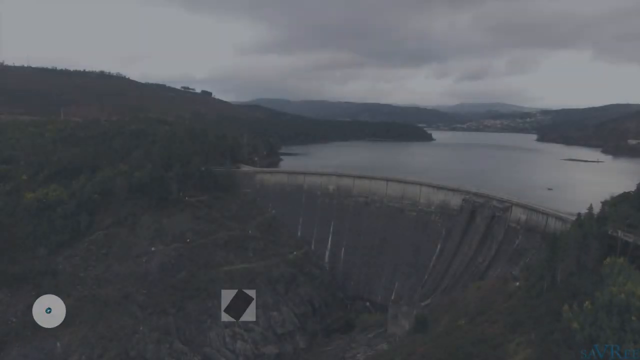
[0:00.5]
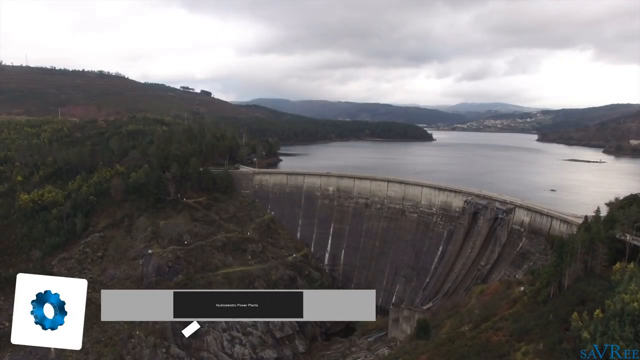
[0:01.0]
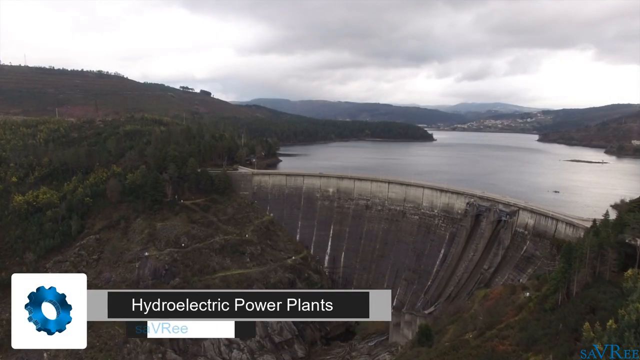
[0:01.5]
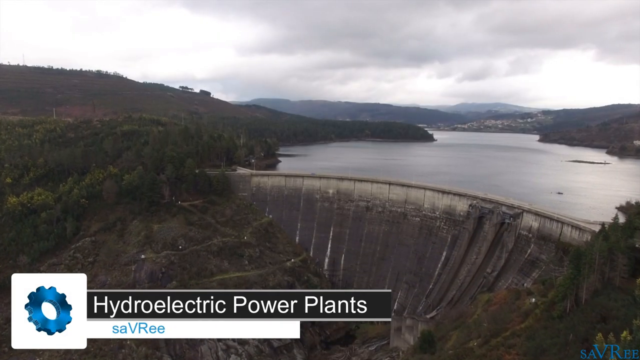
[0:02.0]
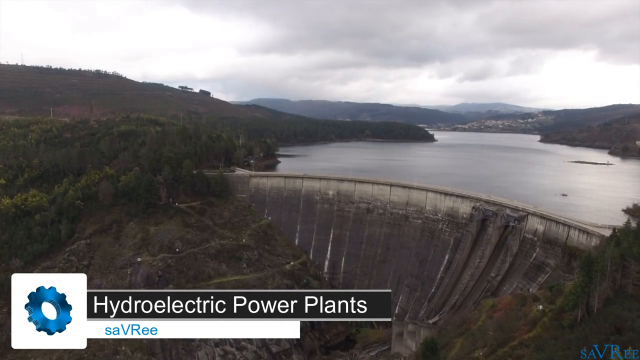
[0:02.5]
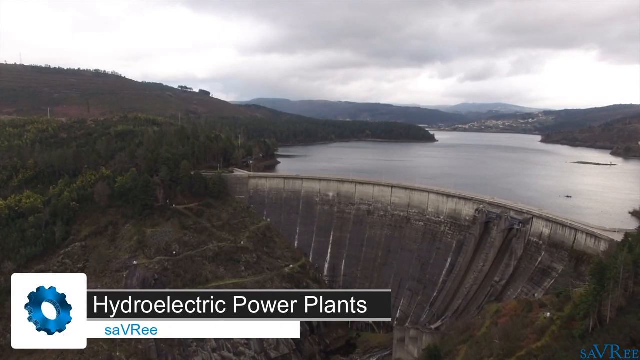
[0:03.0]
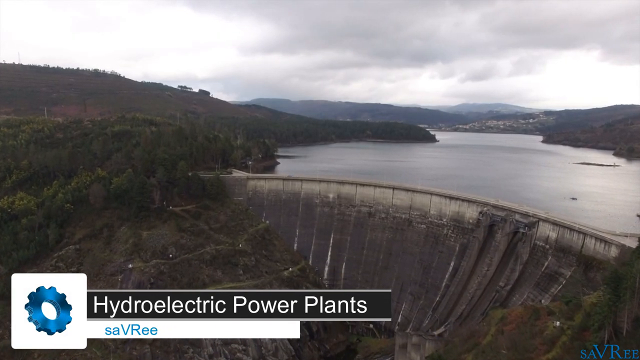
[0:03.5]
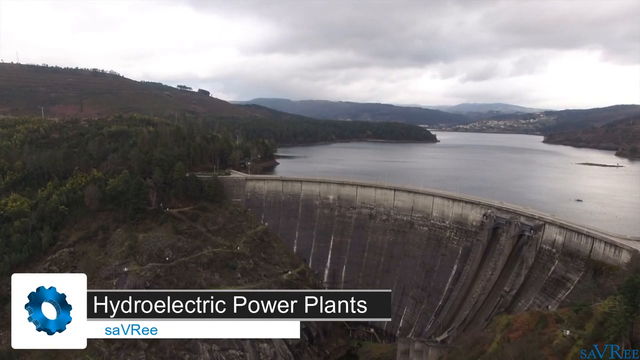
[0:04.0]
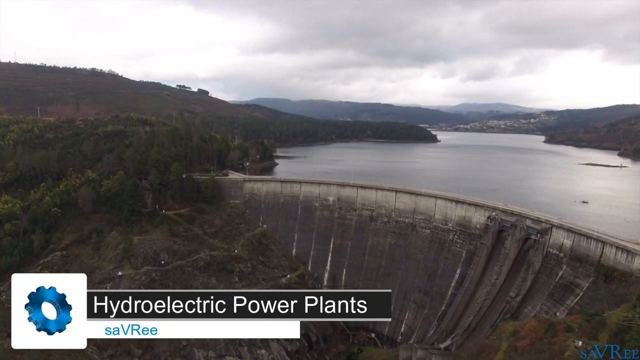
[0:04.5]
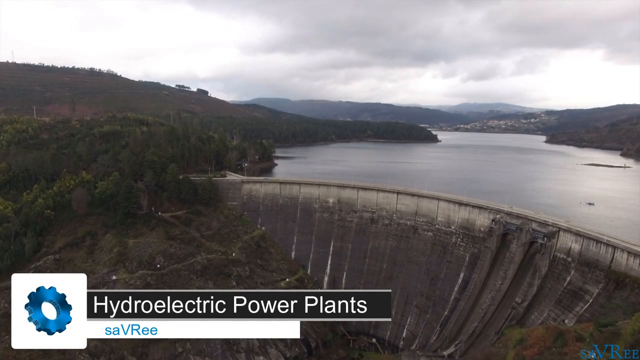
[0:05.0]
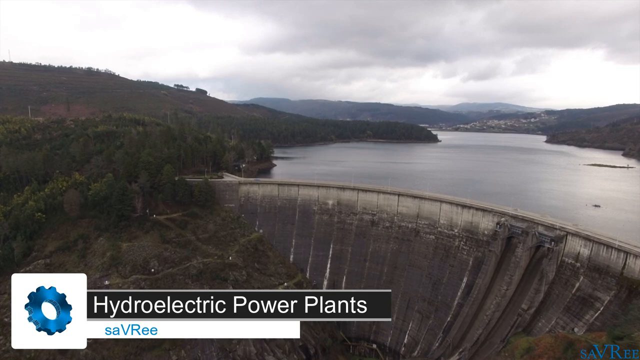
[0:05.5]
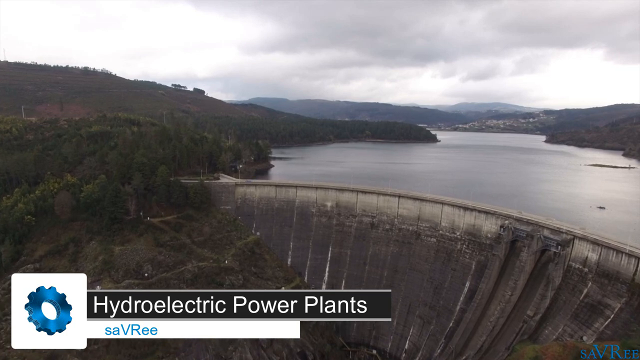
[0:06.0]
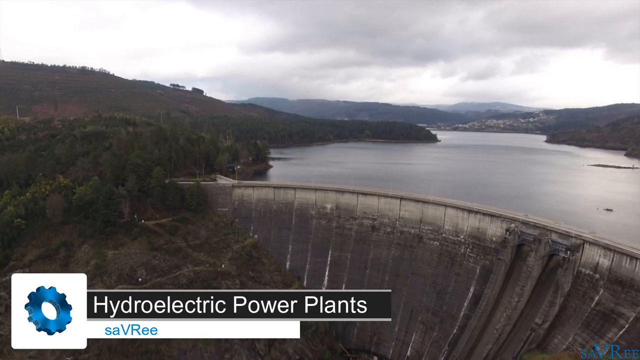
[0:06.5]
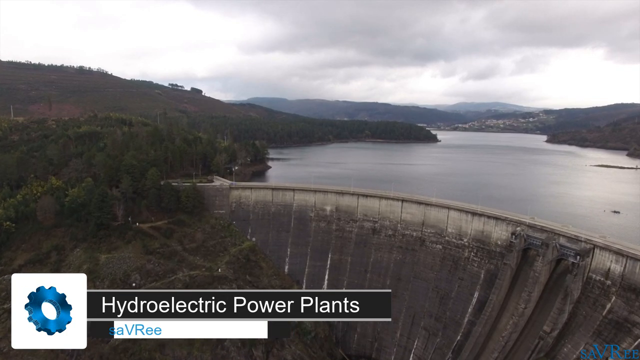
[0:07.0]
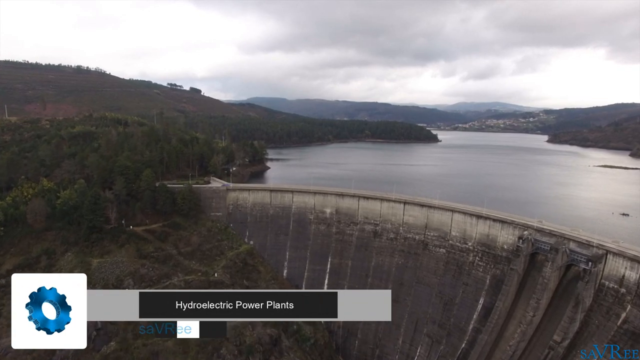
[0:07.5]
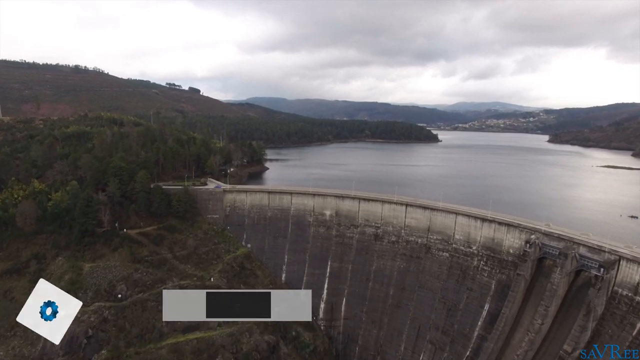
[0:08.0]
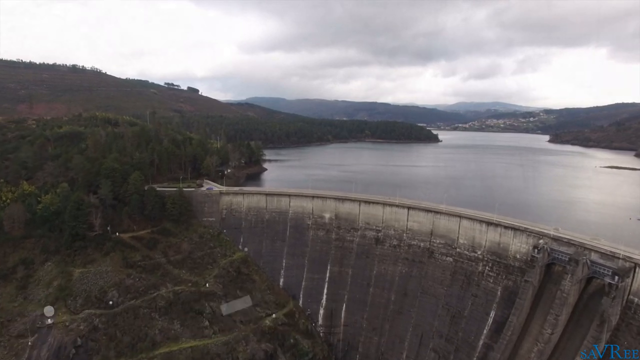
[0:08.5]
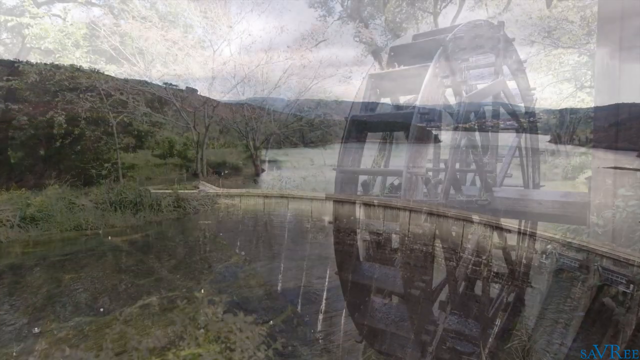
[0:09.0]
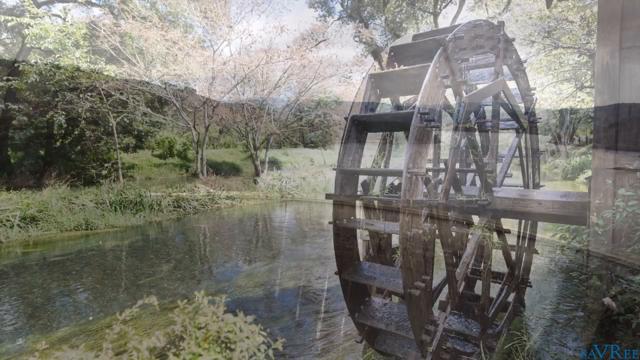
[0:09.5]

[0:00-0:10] Text in white appears in a kind of news-like panel reading "hydroelectric power plants," with a blue cog wheel to the left of it. A large dam with water behind it is then shown in a slow zoom, after which the screen transitions to a water wheel in nature, with trees behind it and water in a pond-like area, in a swampish environment. No physical subjects are depicted.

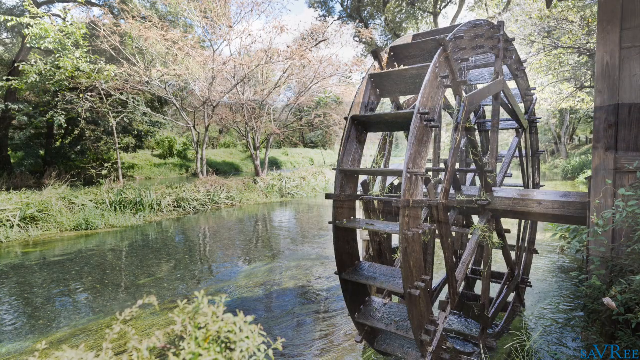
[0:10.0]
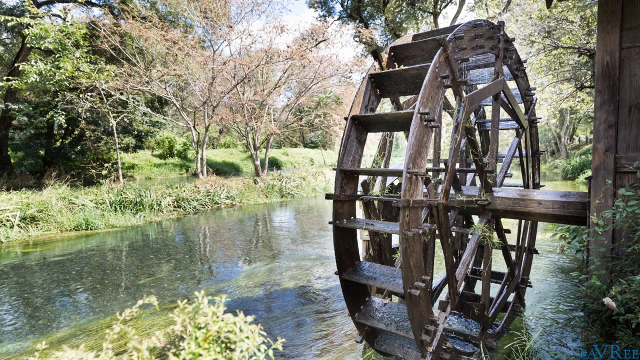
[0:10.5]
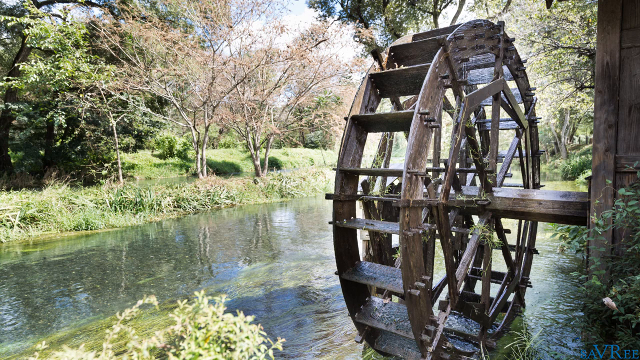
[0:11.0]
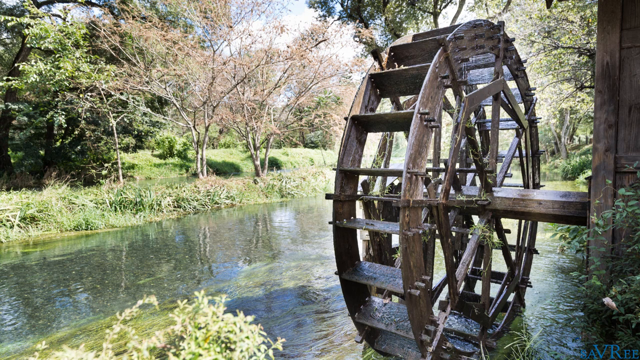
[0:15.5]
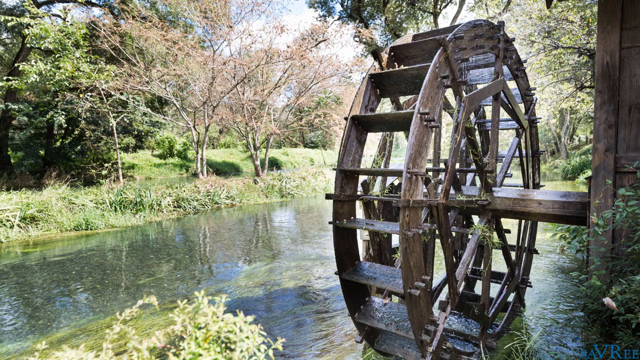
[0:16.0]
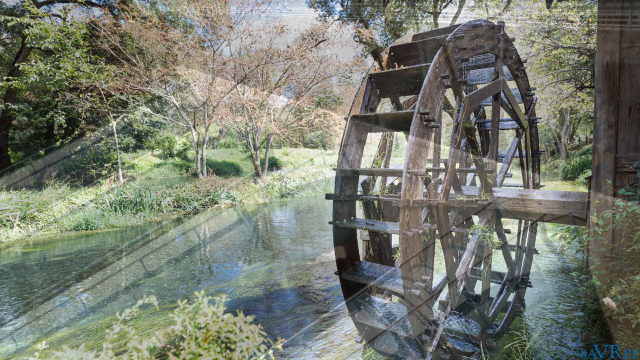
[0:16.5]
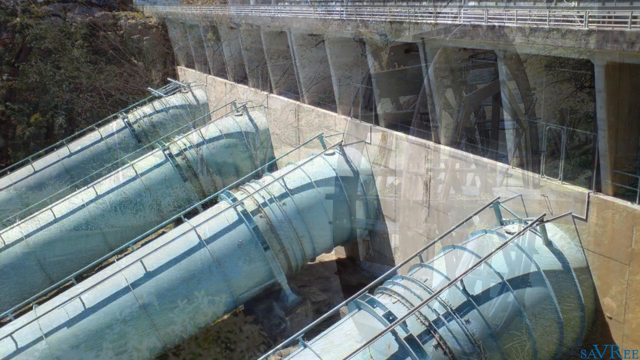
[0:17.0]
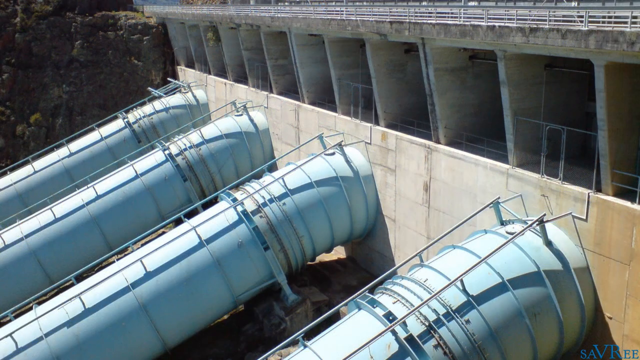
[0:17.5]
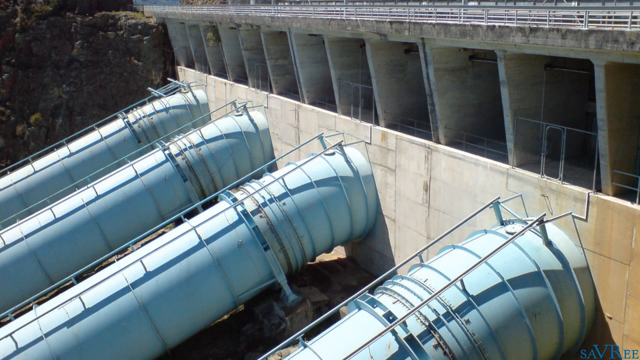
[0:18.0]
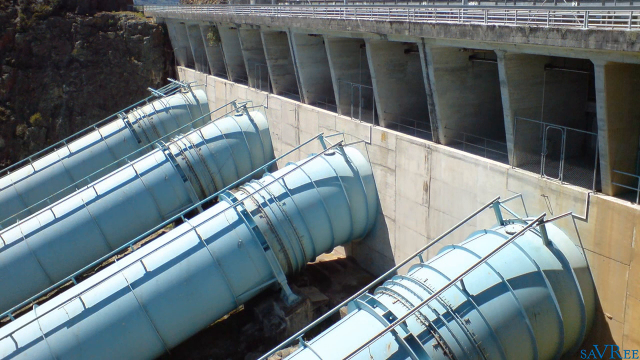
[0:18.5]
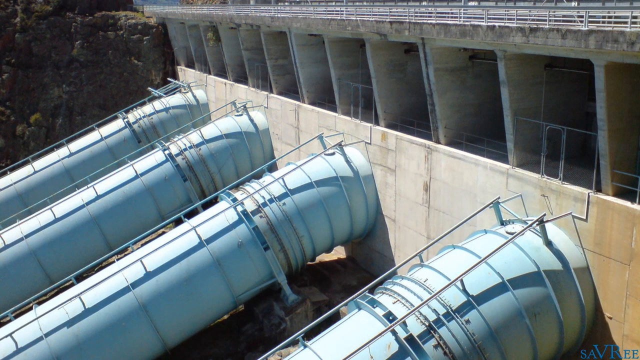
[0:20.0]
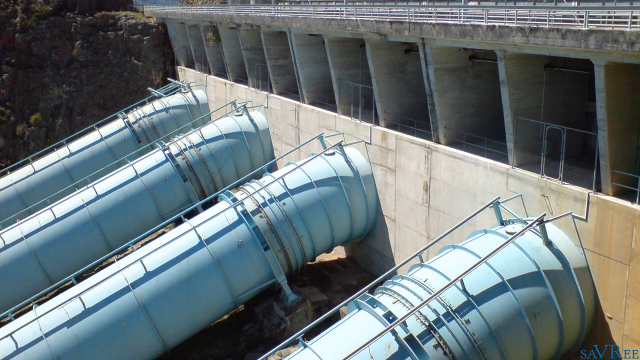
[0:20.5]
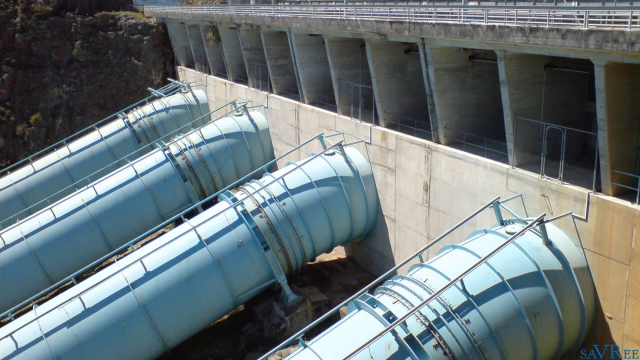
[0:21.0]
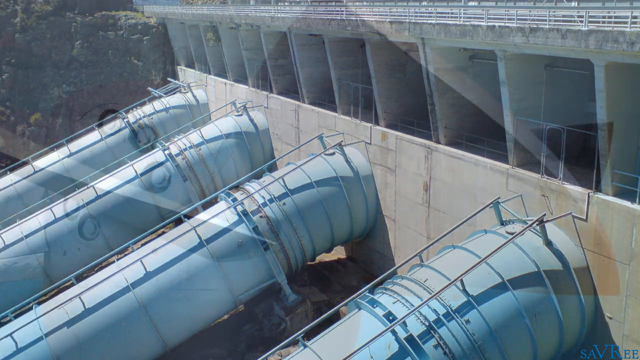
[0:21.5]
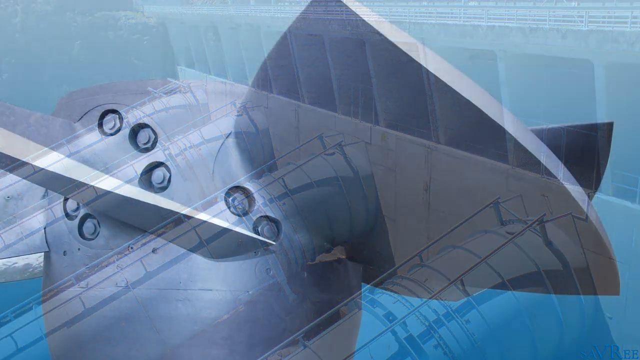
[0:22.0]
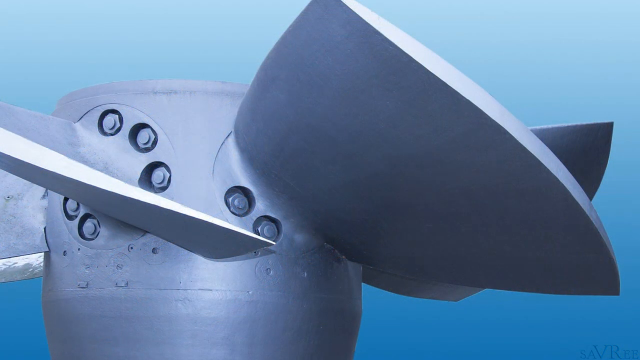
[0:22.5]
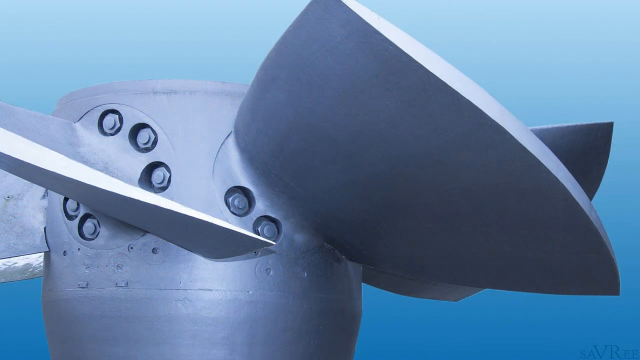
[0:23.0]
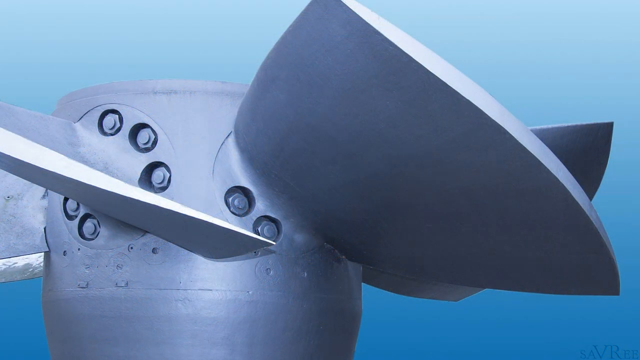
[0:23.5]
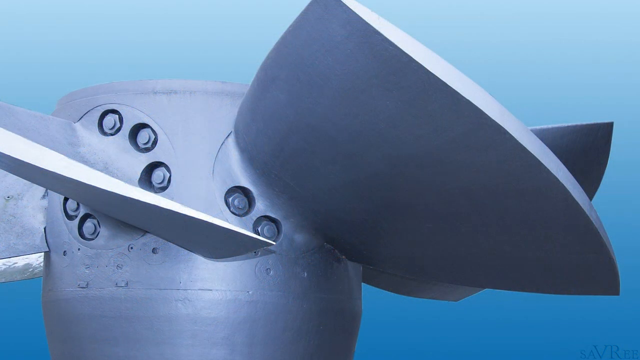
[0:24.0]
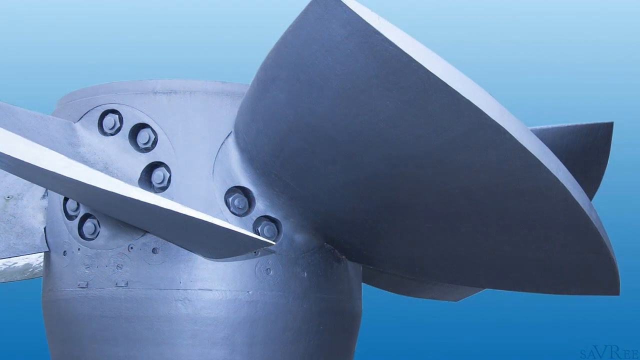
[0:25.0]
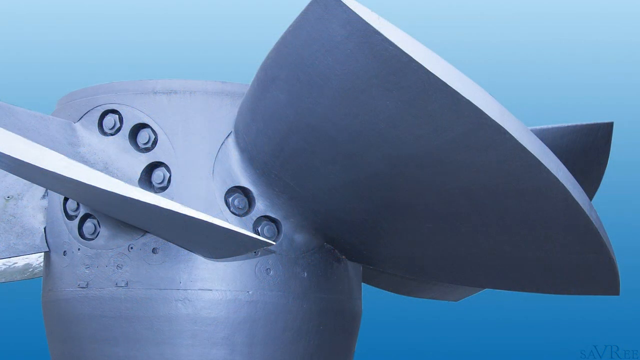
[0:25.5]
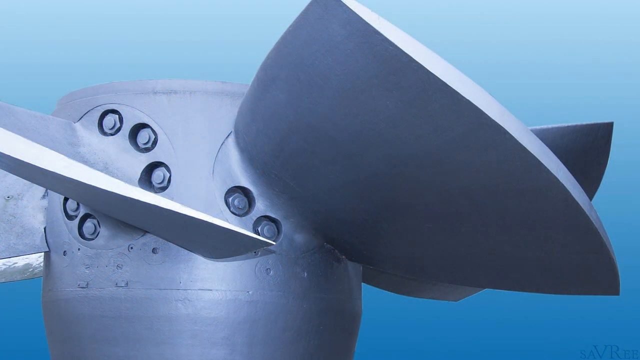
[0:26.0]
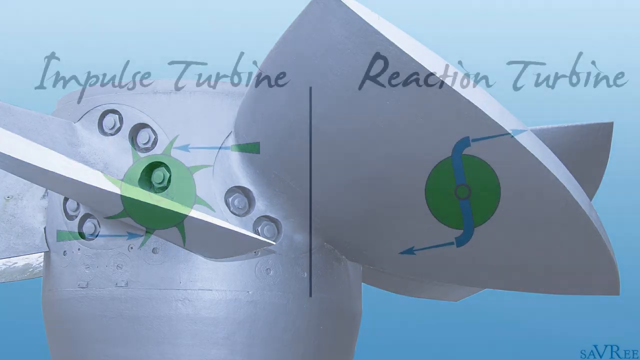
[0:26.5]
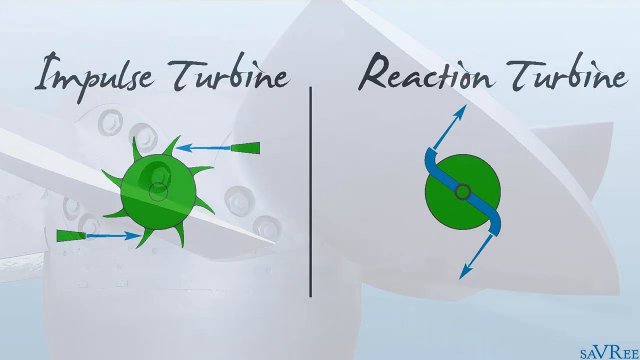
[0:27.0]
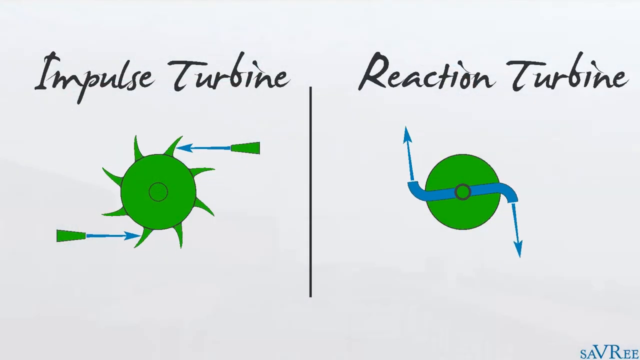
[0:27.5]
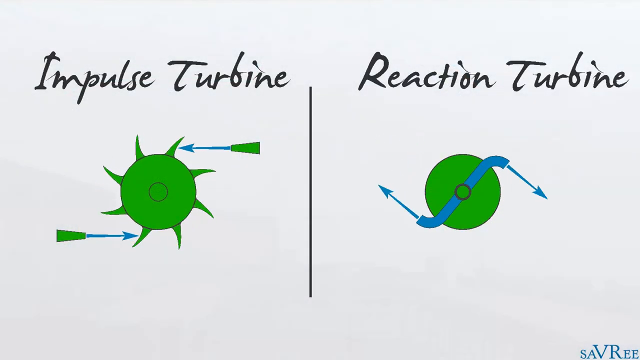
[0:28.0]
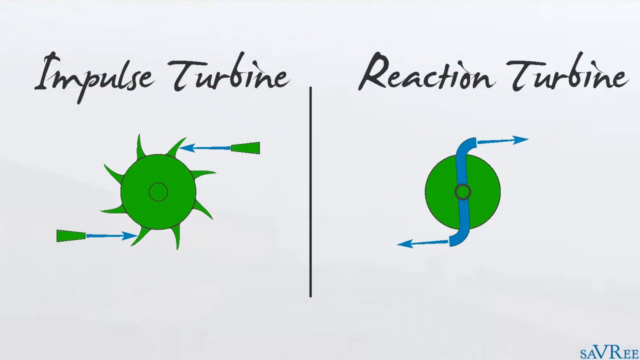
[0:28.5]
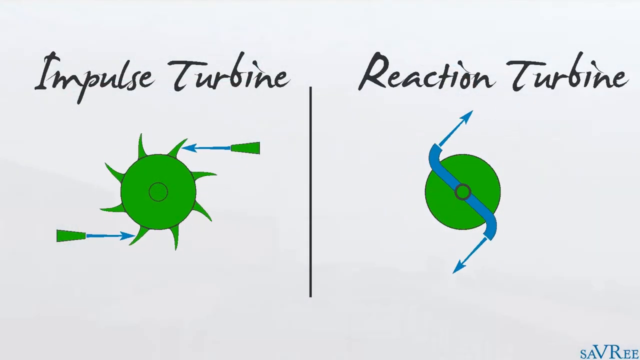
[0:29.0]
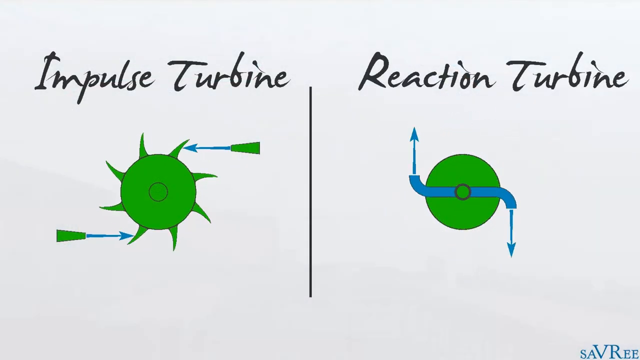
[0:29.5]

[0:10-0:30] The water wheel continues to be shown as a static image, next to a river in a forest. The scene transitions to the edge of a dam, with several light blue pipes coming out of the side of the dam-looking structure. Another transition shows what looks to be some sort of large steel propeller with metal bolts in its side. Next comes a white screen with black text reading "impulse turbine," a large vertical black line, and more text reading "reaction turbine." Images of green propellers then appear, with arrows indicating their direction and how they move. No physical subjects, including people and animals, are shown.